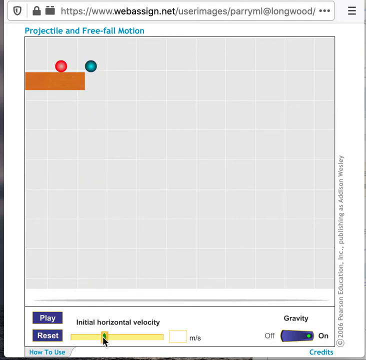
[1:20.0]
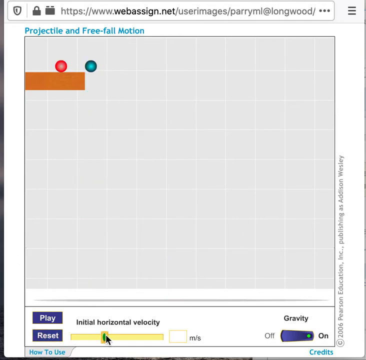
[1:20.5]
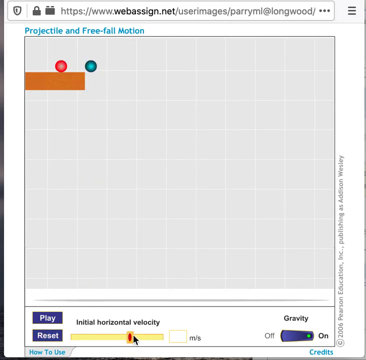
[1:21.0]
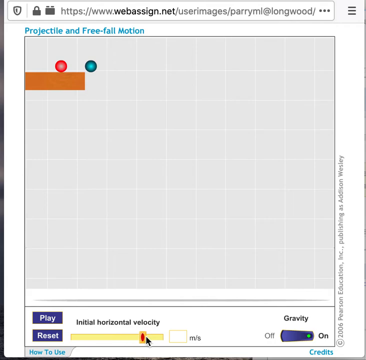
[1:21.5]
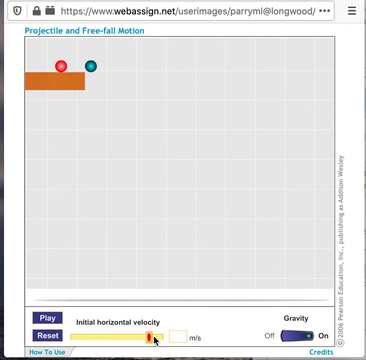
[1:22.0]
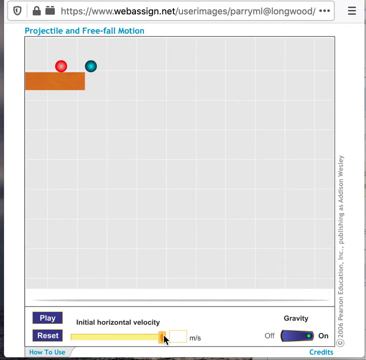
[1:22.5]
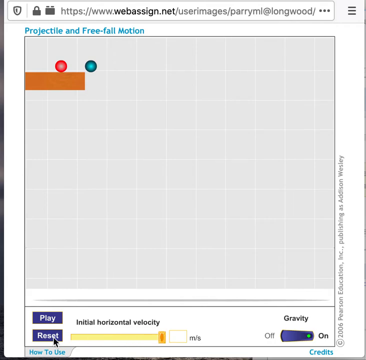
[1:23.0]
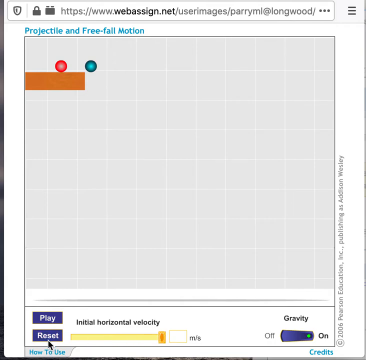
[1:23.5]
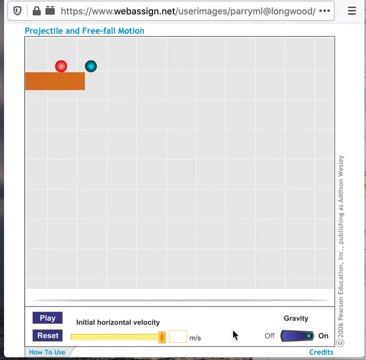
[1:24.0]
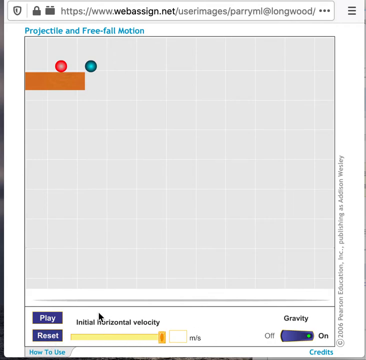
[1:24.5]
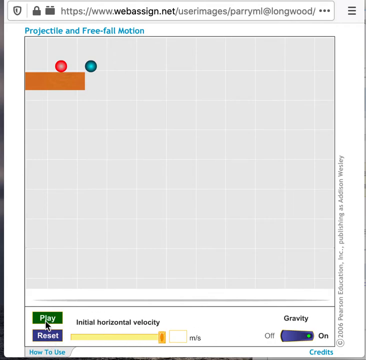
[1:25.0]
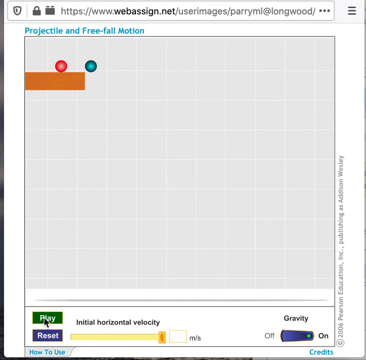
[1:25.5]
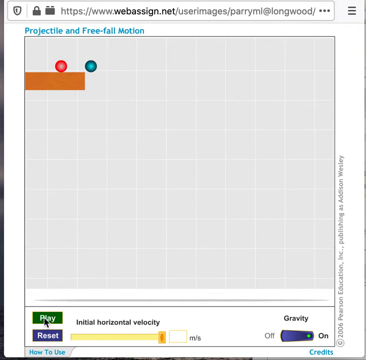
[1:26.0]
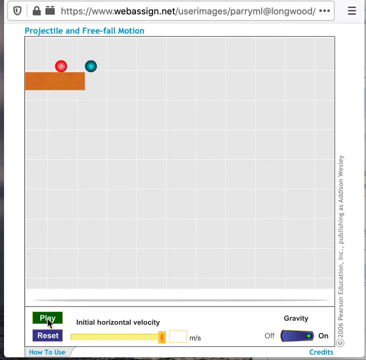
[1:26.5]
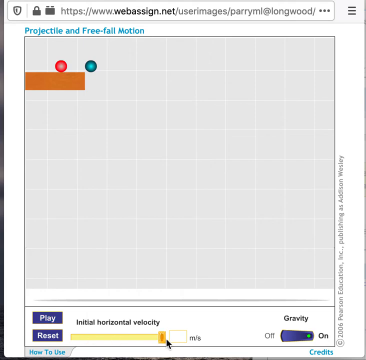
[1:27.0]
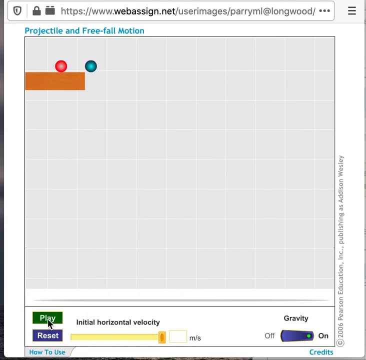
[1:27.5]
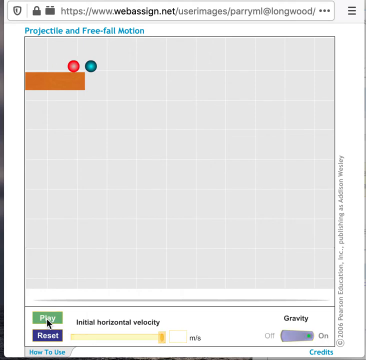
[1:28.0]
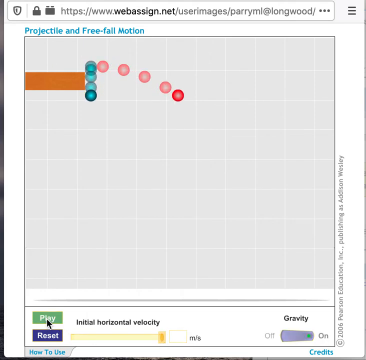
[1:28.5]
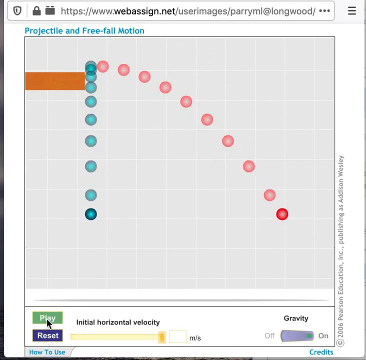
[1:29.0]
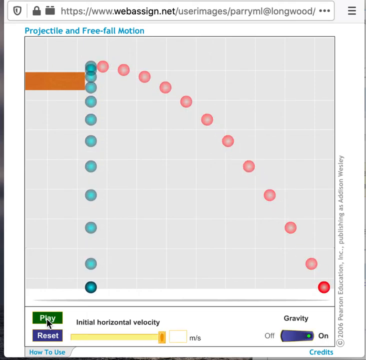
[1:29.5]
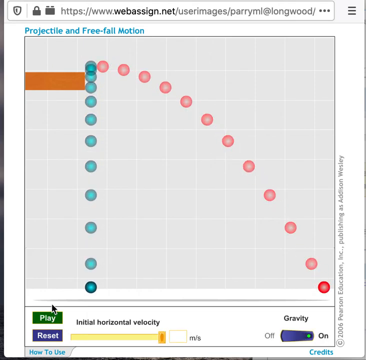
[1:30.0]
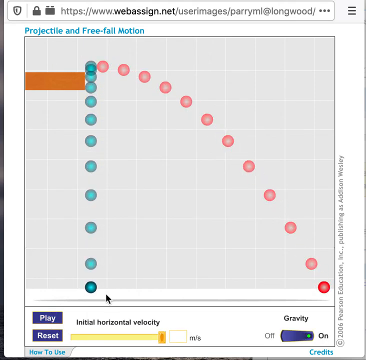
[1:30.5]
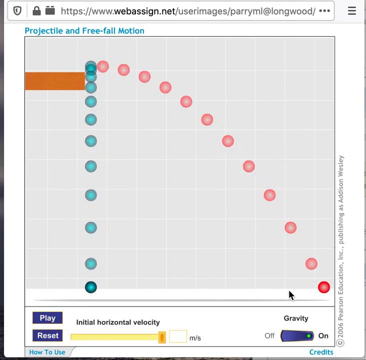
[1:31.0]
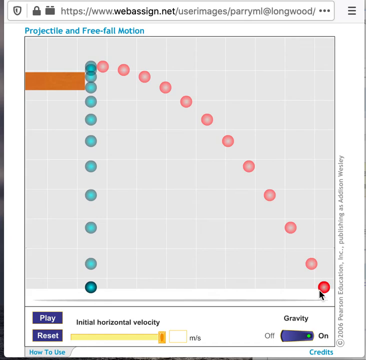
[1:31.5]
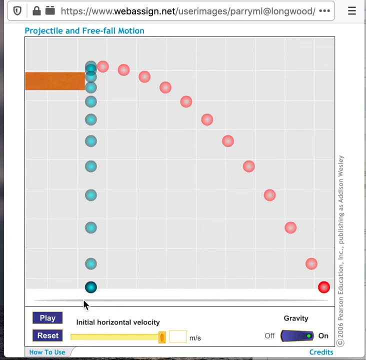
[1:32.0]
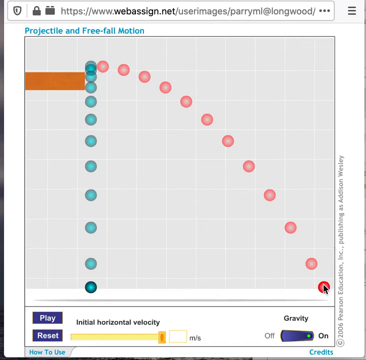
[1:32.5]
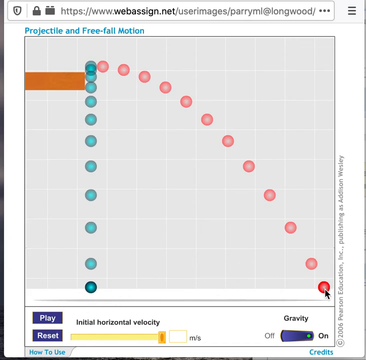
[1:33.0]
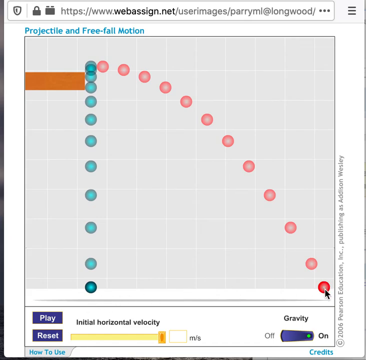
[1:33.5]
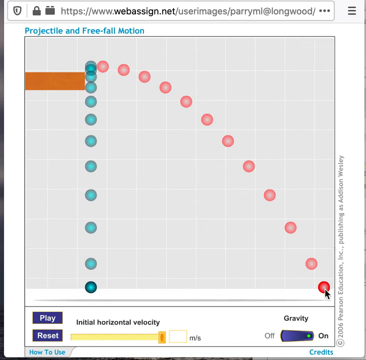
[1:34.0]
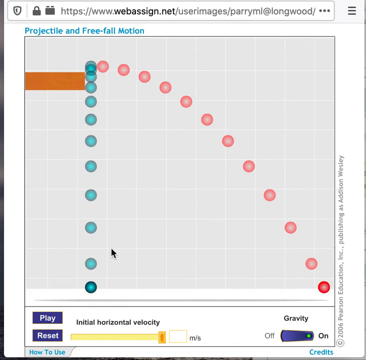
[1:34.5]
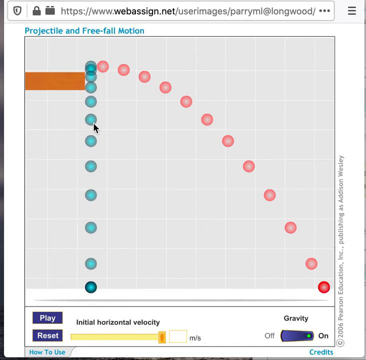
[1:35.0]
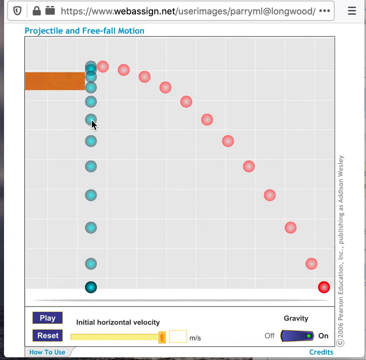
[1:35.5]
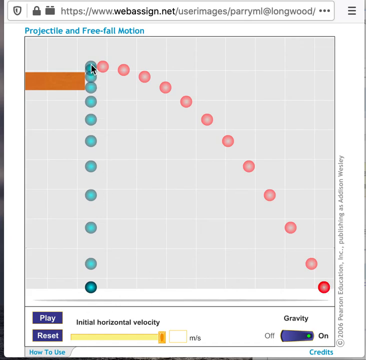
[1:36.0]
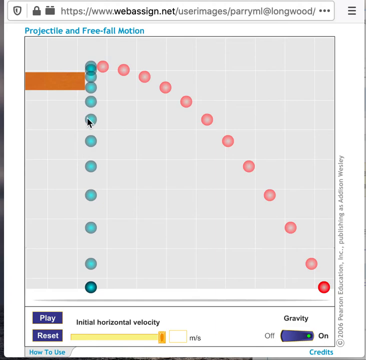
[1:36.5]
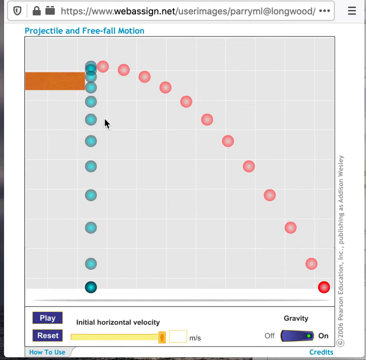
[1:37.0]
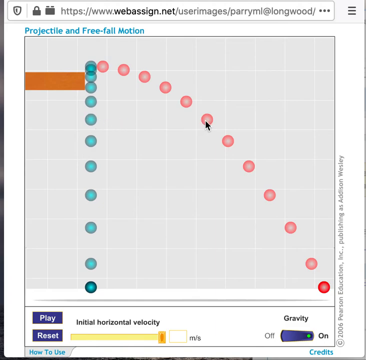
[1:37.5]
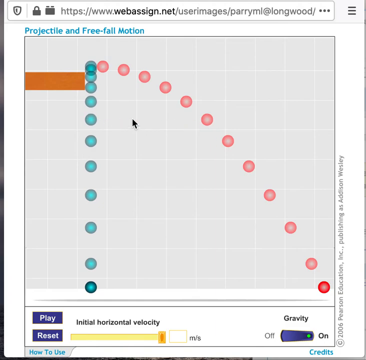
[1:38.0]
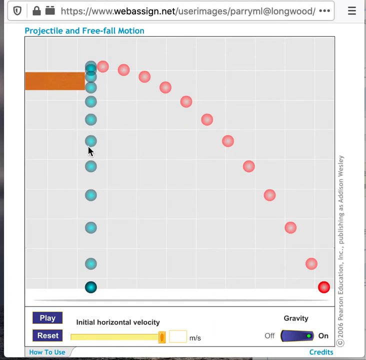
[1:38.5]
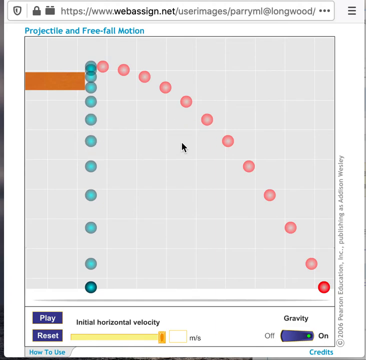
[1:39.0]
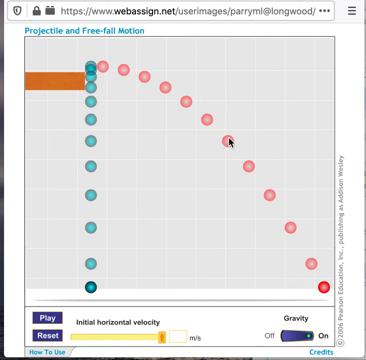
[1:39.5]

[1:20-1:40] A white search bar at the top of the screen reads "www.webasign.net". Below it is a screen made up of light gray squares running vertically and horizontally. In the bottom left-hand corner are two blue rectangles stacked on top of one another, the top one with the word "PLAY" in white and the bottom one with the word "RESET" in white. To the right is a yellow line with "INITIAL HORIZONTAL VELOCITY" above it in black. In the bottom right-hand corner is a blue rectangle with "OFF" on its left side and "ON" on its right side, and "GRAVITY" above it in black. In the top left corner of the gridded screen is a brown rectangle with a red ball and a green ball just sitting on top of it. Someone moves their mouse, and the black arrow moves down and slides the switch on the yellow line marked "INITIAL HORIZONTAL VELOCITY" to the right. The arrow then pushes PLAY: the blue ball falls directly off and comes straight down to the ground, while the red ball shoots outward and travels farther out, away from the left side.